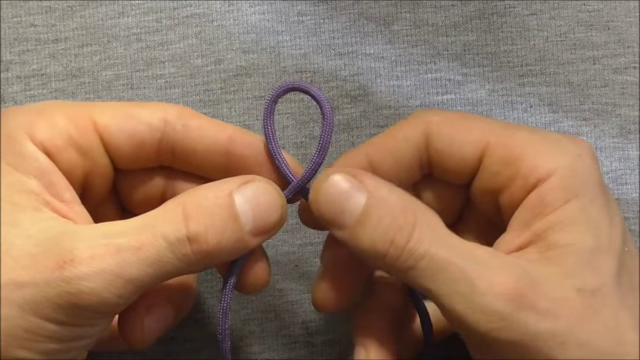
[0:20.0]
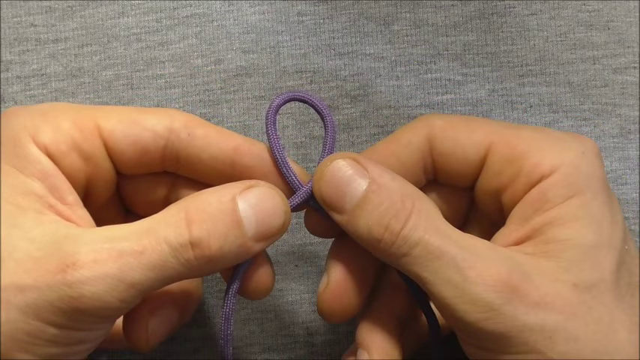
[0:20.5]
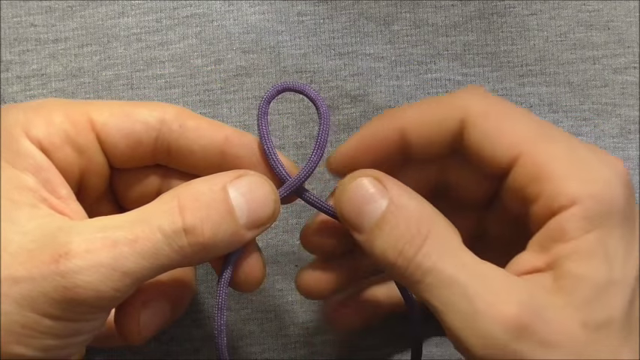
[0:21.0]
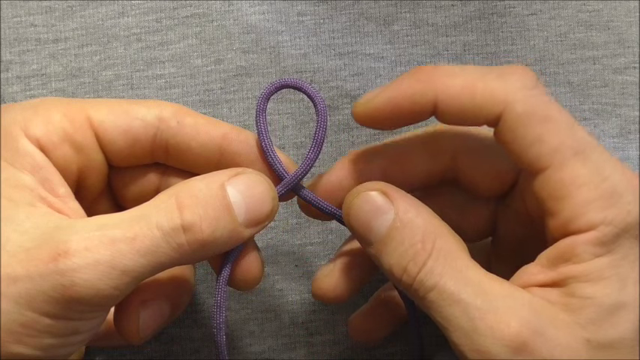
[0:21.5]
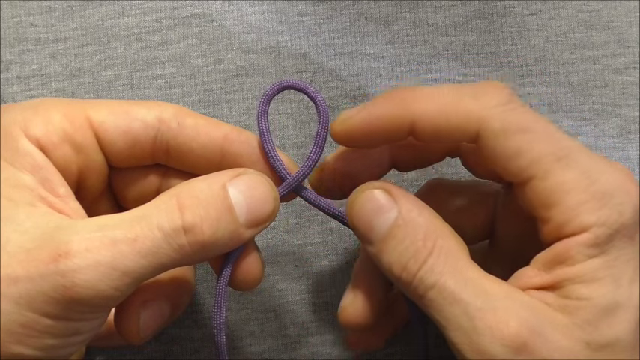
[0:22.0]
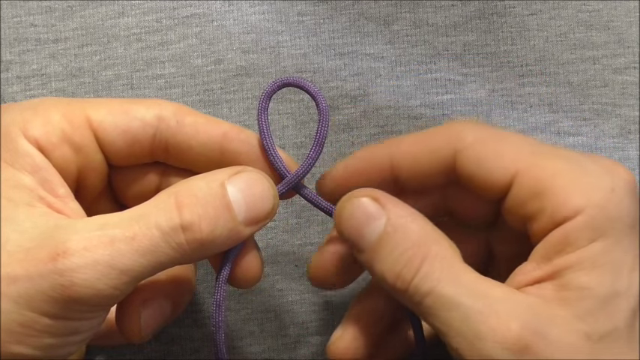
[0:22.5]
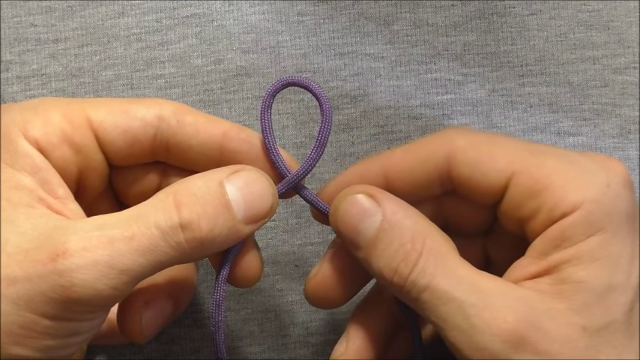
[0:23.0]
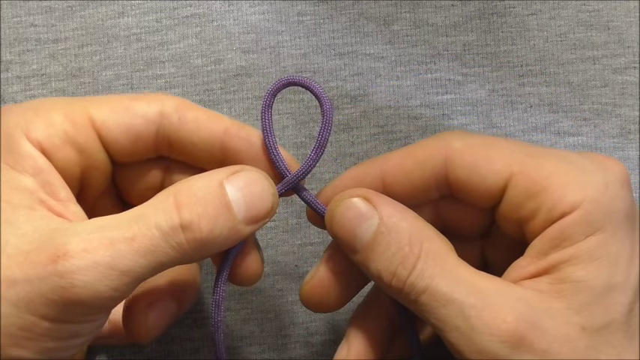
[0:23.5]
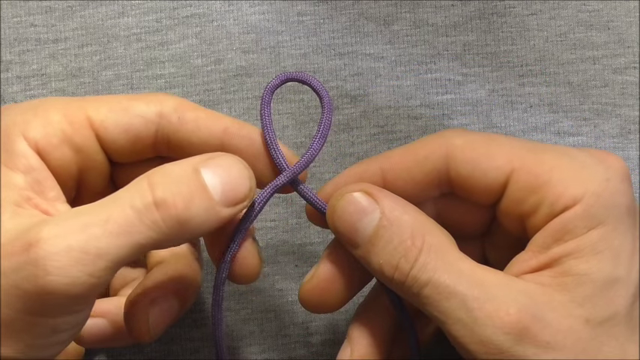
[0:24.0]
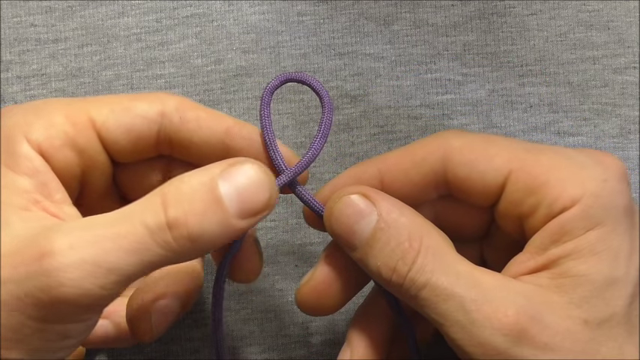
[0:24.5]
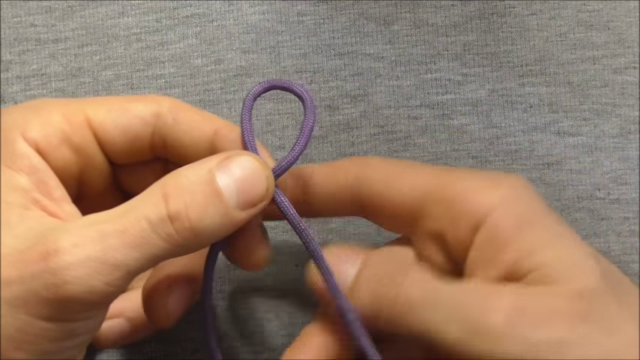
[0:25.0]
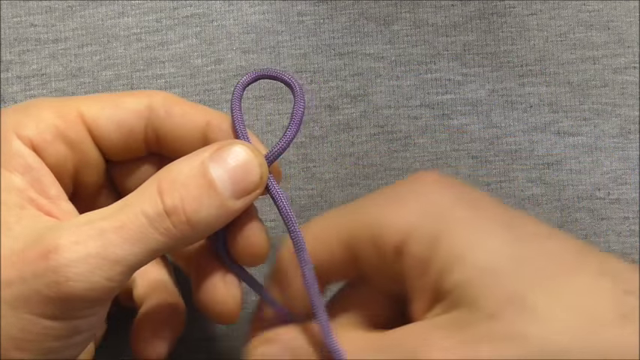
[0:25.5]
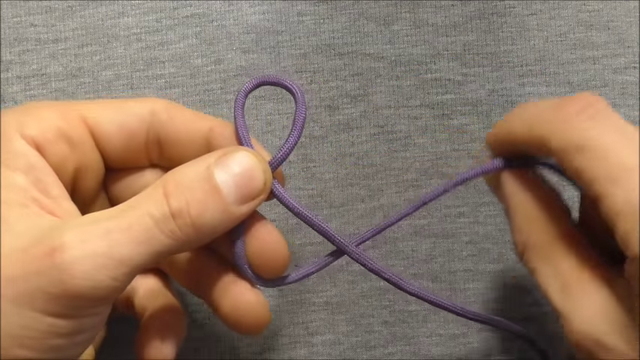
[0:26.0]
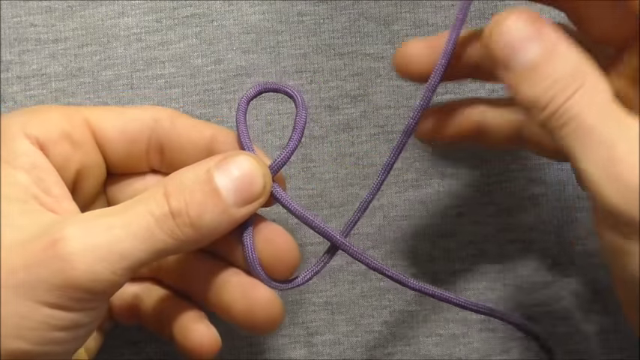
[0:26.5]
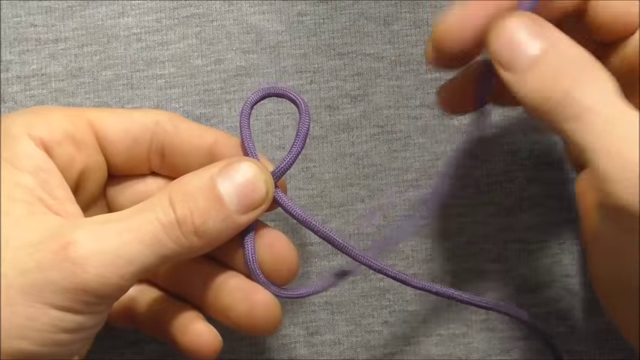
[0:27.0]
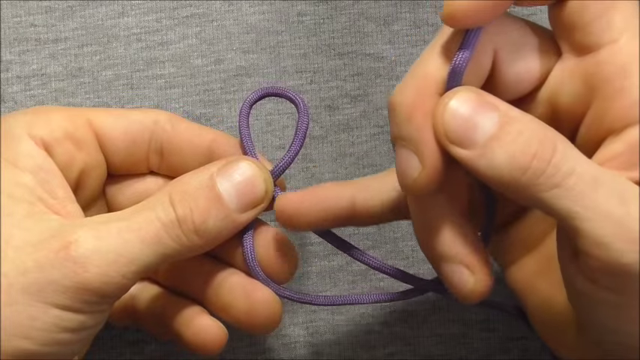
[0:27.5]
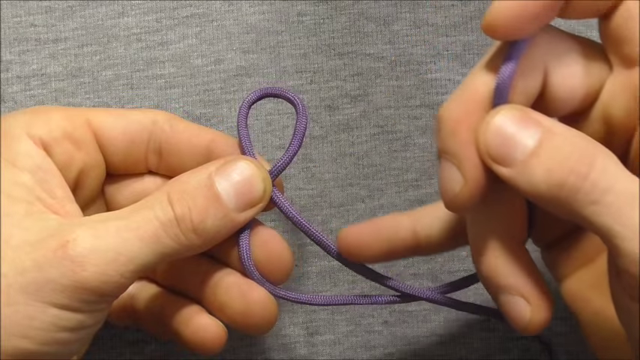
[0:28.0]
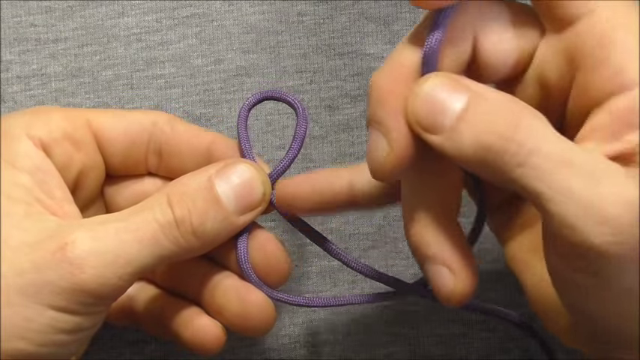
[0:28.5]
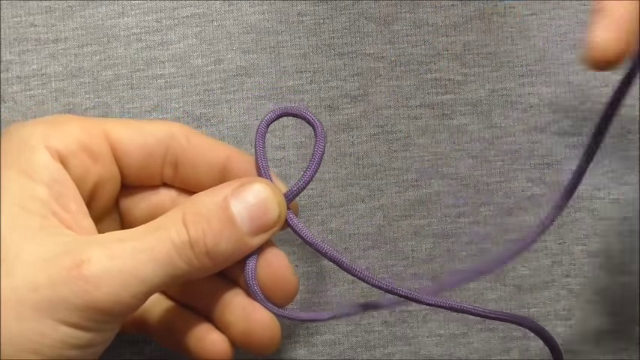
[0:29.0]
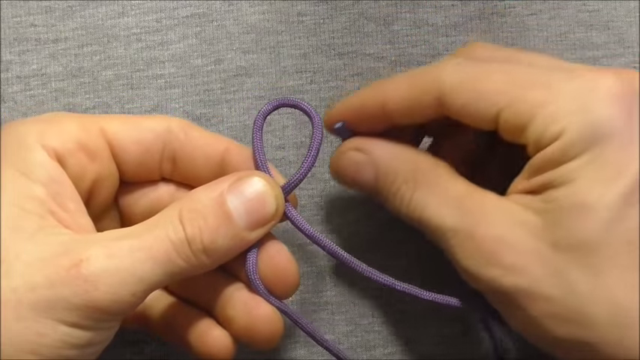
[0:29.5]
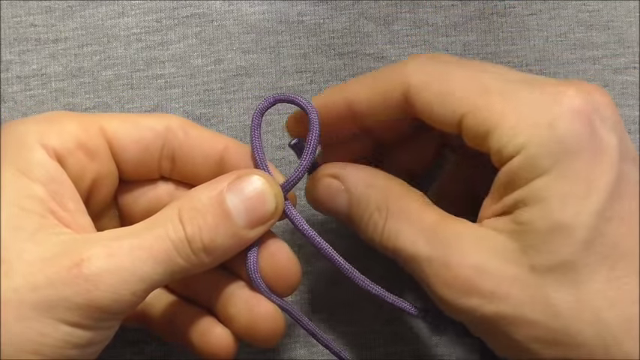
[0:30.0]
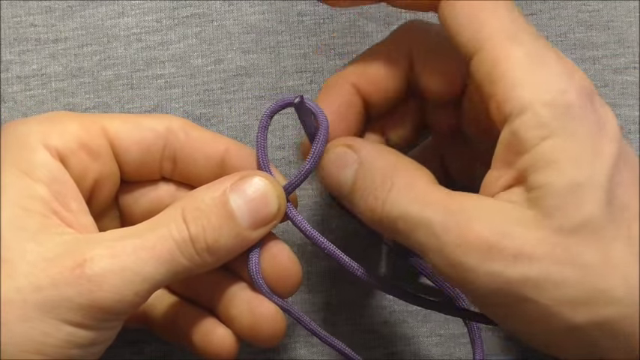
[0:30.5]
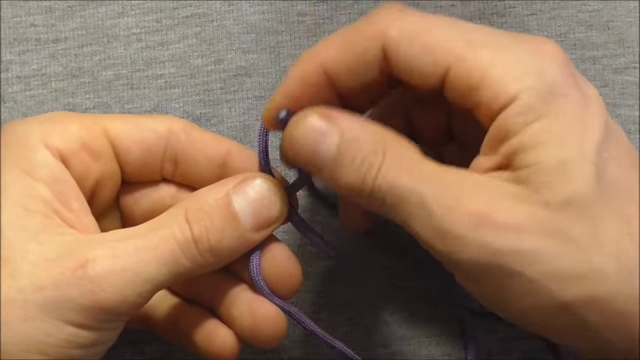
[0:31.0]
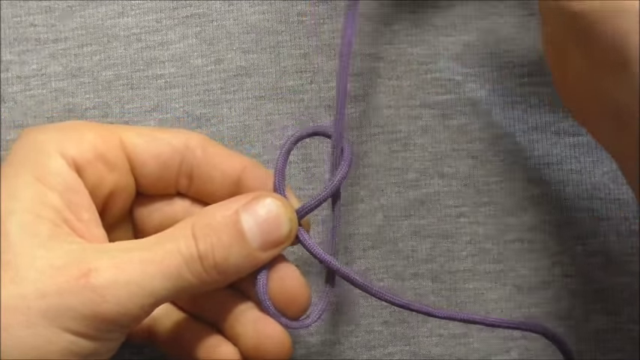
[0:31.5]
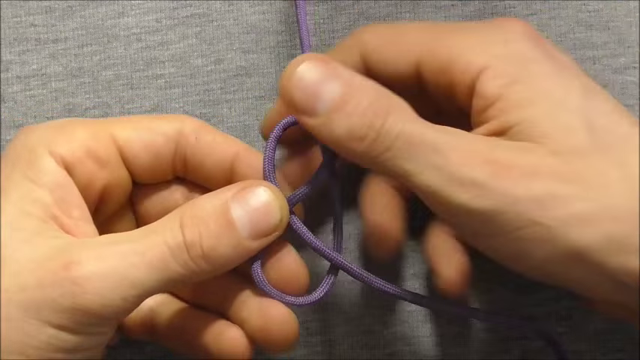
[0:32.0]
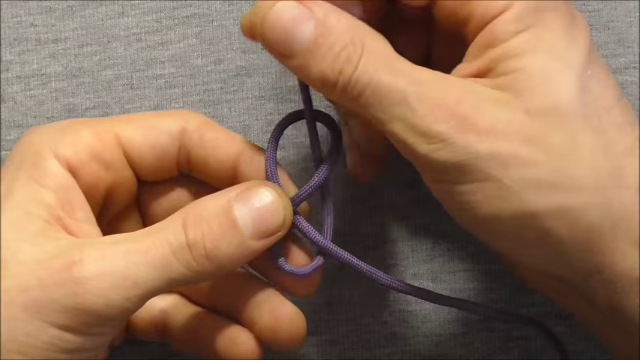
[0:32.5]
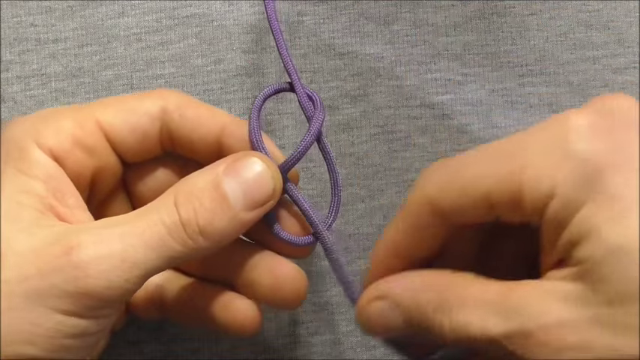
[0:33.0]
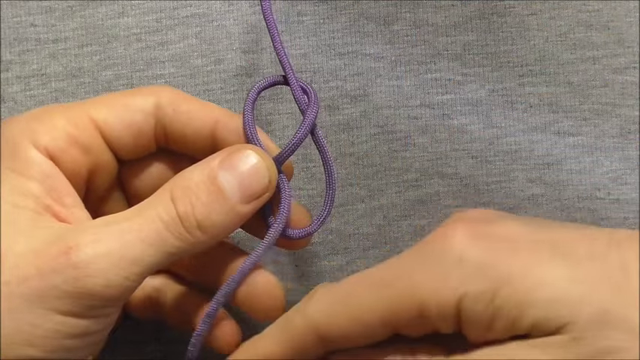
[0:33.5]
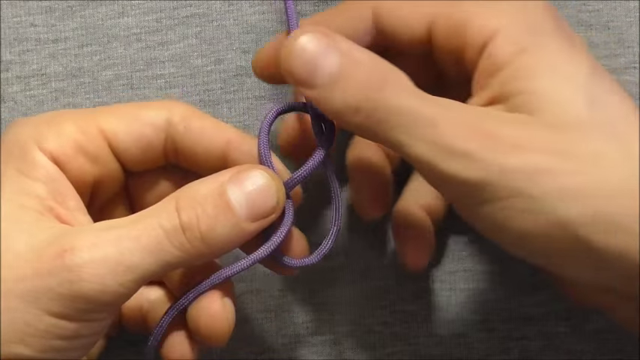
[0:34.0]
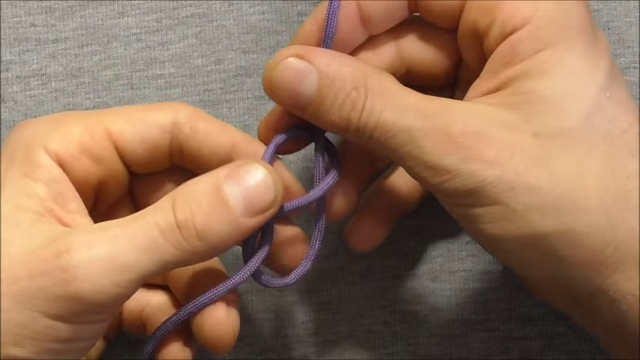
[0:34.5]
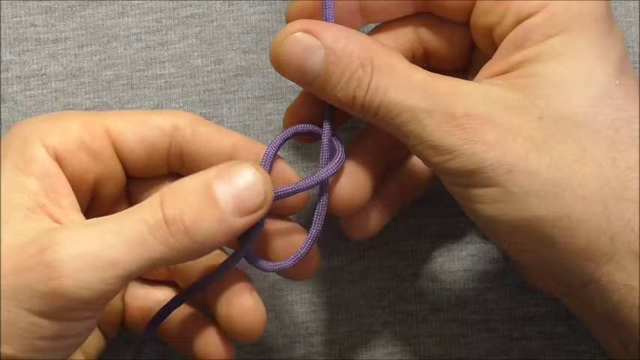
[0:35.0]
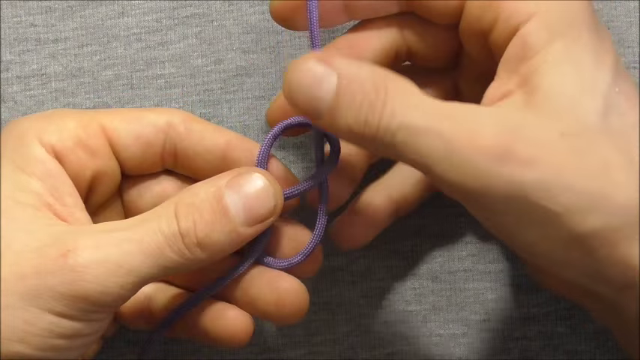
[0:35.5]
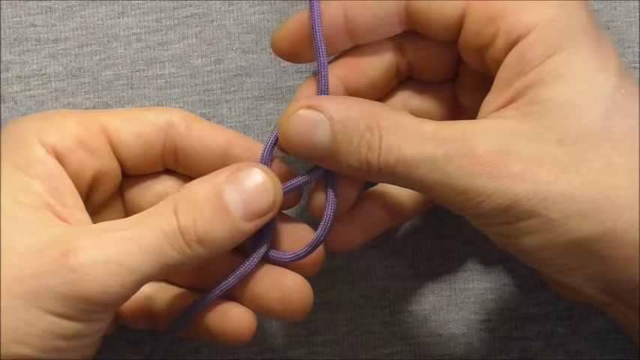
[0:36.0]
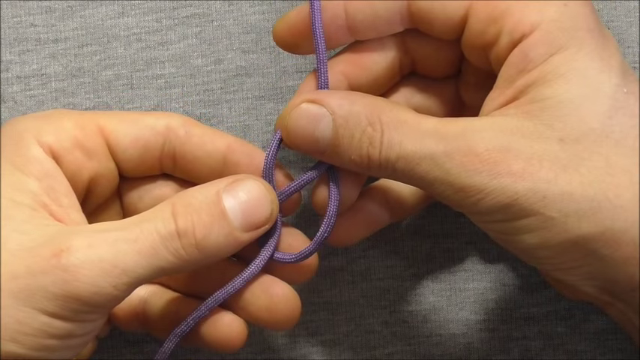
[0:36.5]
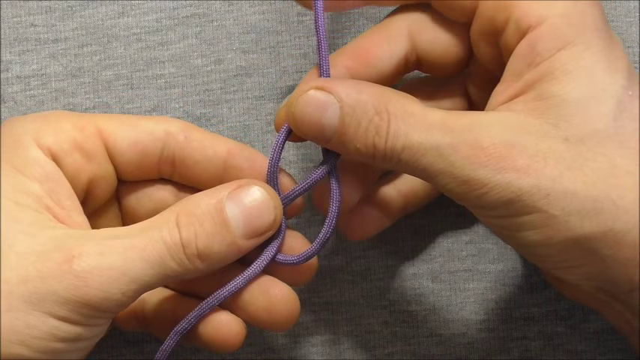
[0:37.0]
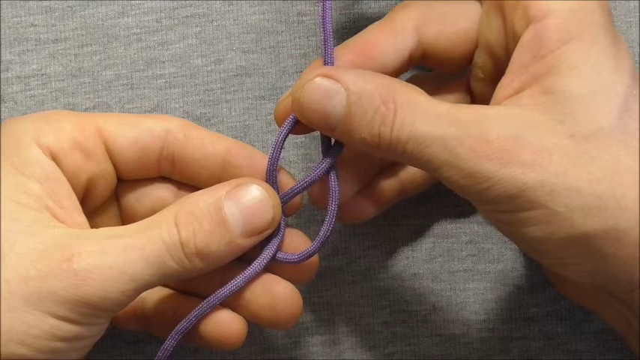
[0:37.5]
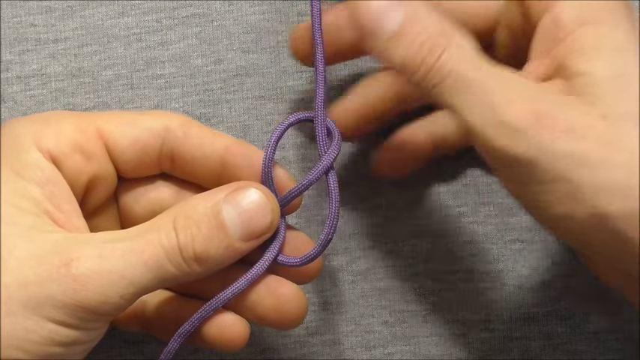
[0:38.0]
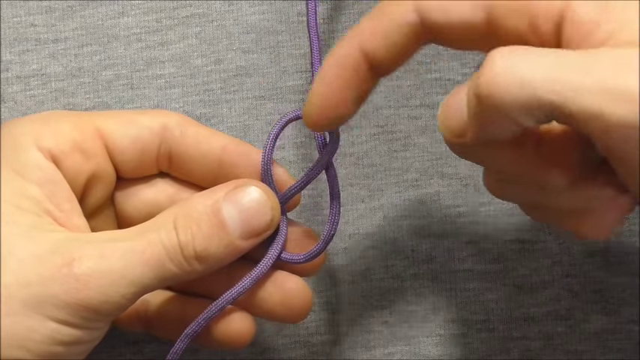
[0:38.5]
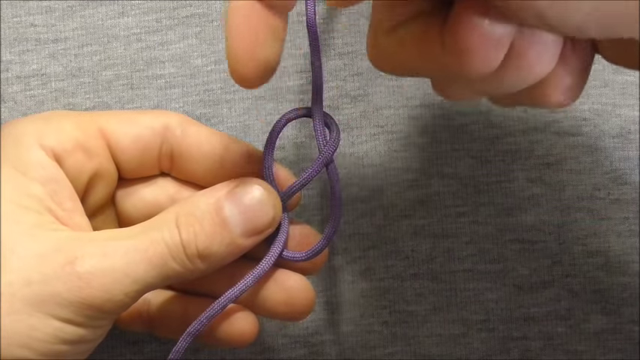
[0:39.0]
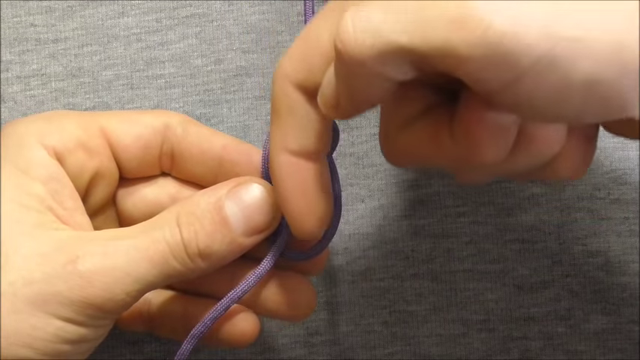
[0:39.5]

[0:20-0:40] The video focuses on a person's two hands against a backdrop of what looks like a gray woolen fabric. The hands hold a thick, deep purple strand of fabric in a loop. The right hand slowly begins to form another loop, pushing the end of the fabric into the loop; on closer look, the fabric looks like shoelaces. Both hands then hold the two still-loose loops in place, and the right hand points into the hole in the first loop and makes a downward motion, as if signaling the direction in which to put the next loop. The hands look very neat, and the nails are not manicured. The hands move very slowly and deliberately, as if giving instructions on how to create the loops.